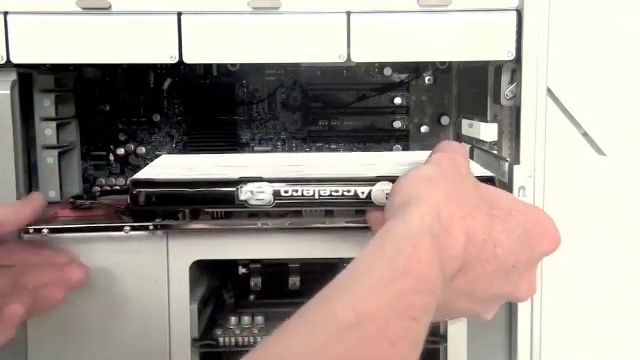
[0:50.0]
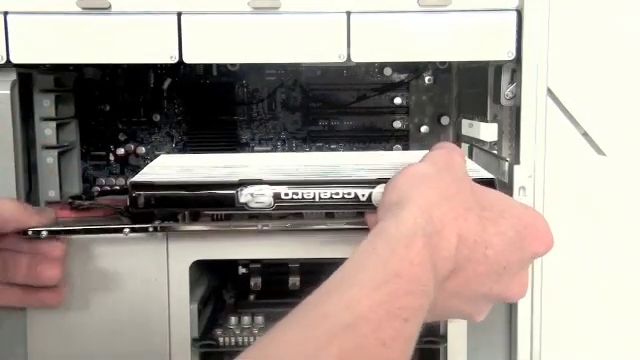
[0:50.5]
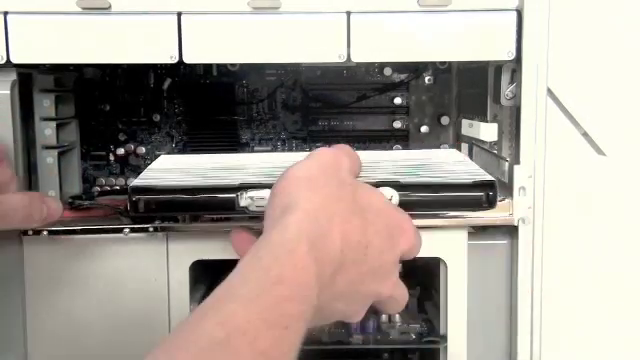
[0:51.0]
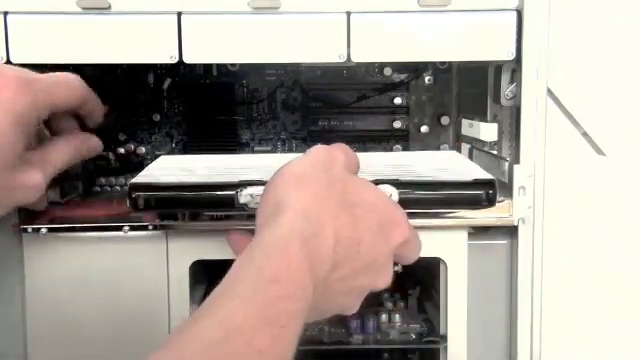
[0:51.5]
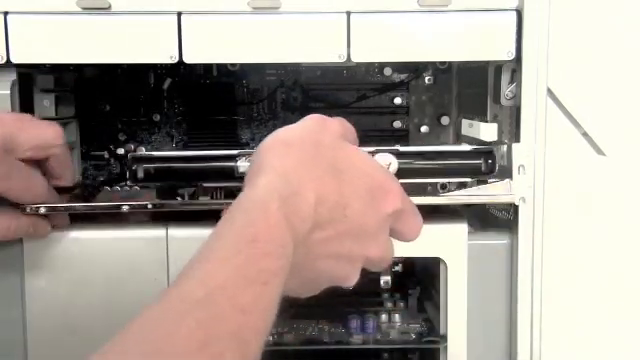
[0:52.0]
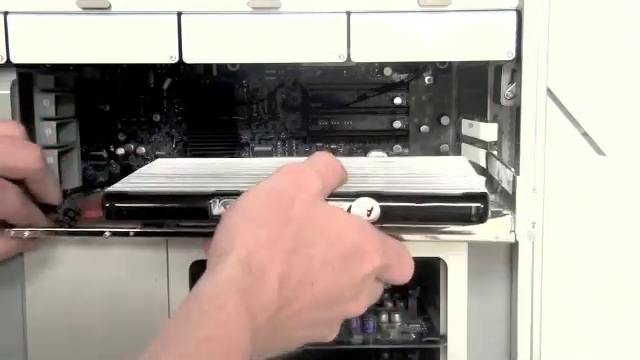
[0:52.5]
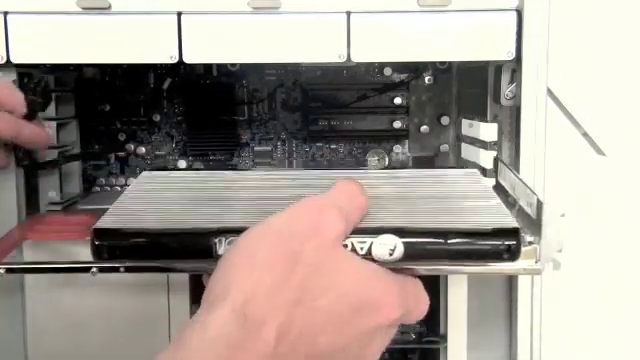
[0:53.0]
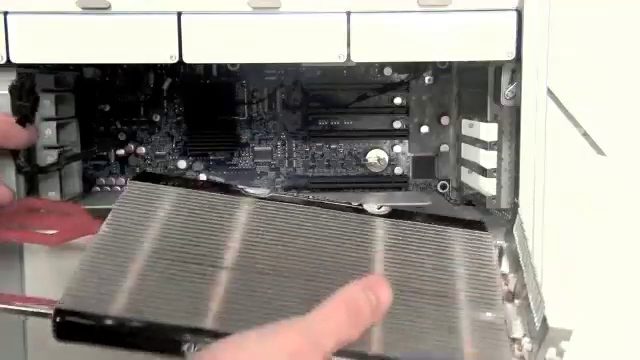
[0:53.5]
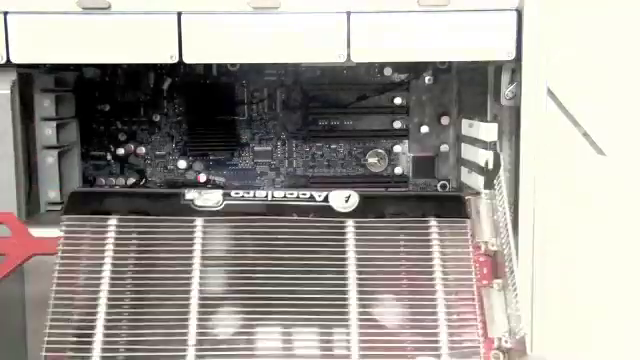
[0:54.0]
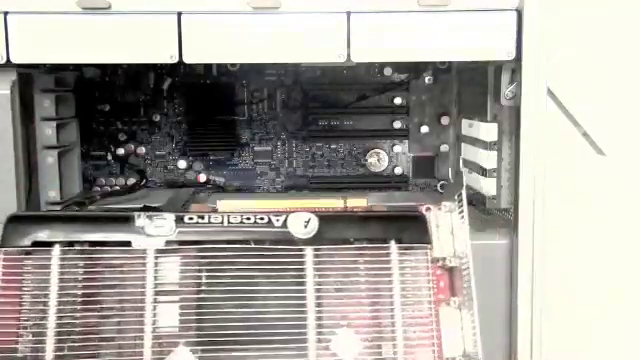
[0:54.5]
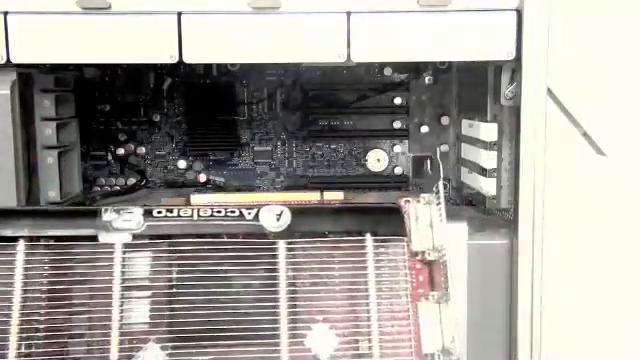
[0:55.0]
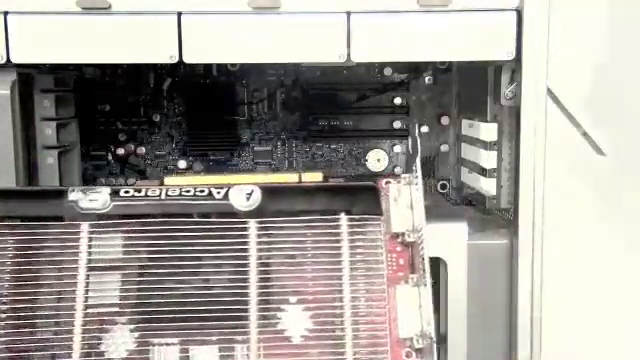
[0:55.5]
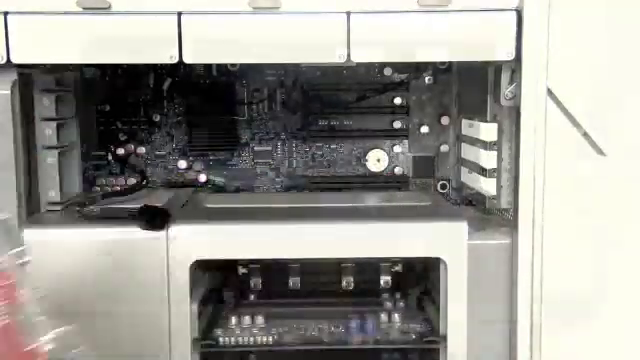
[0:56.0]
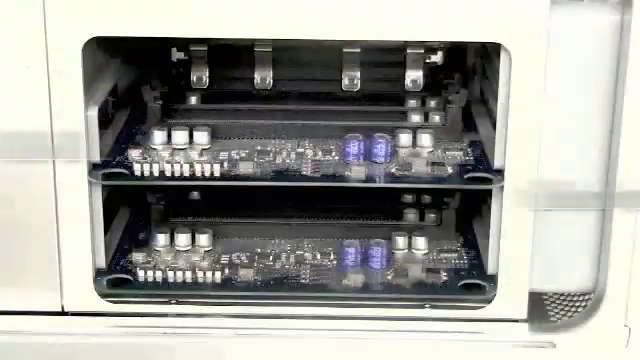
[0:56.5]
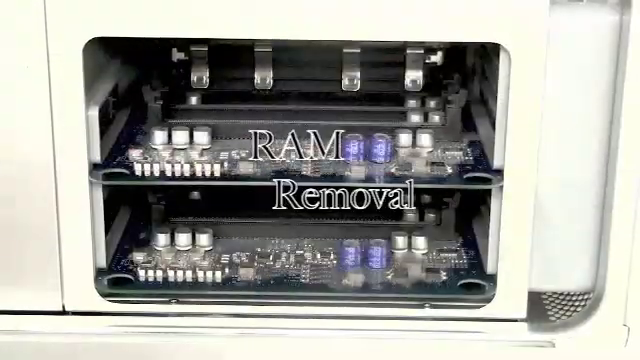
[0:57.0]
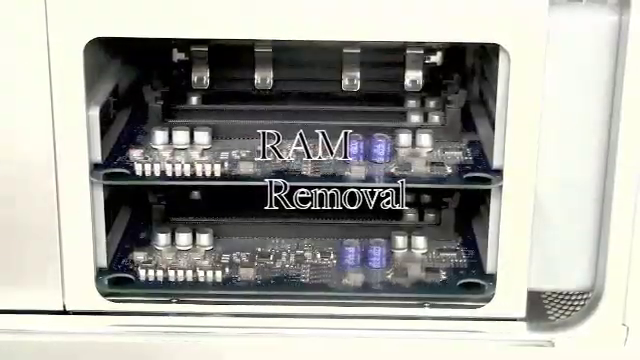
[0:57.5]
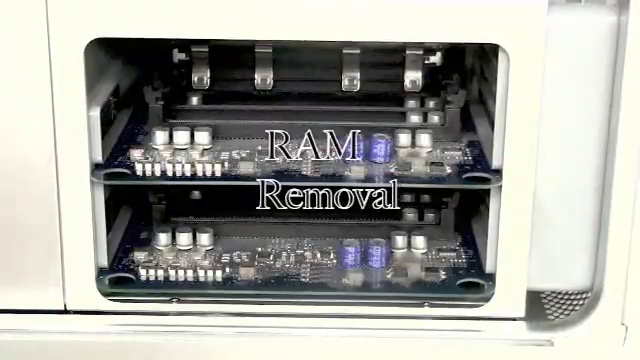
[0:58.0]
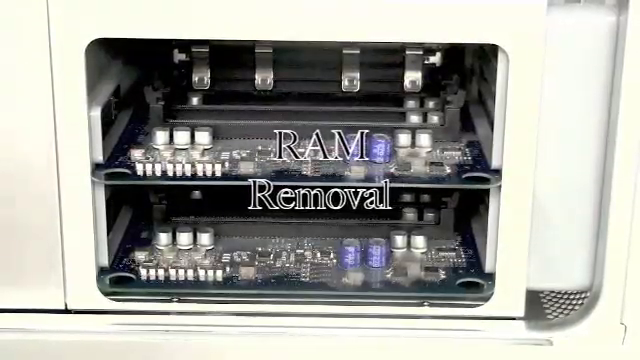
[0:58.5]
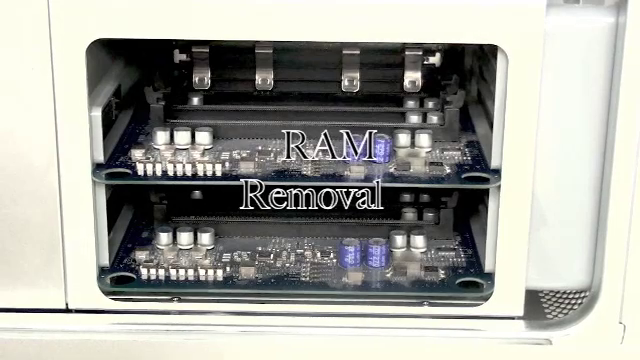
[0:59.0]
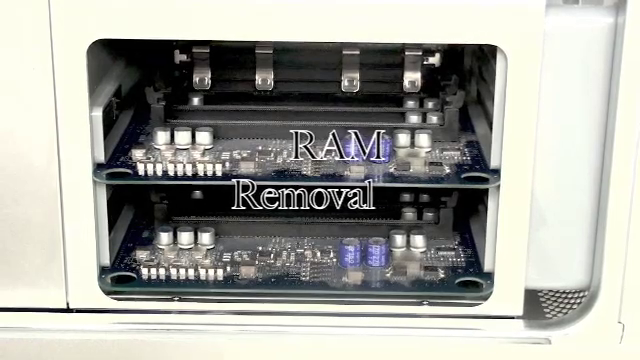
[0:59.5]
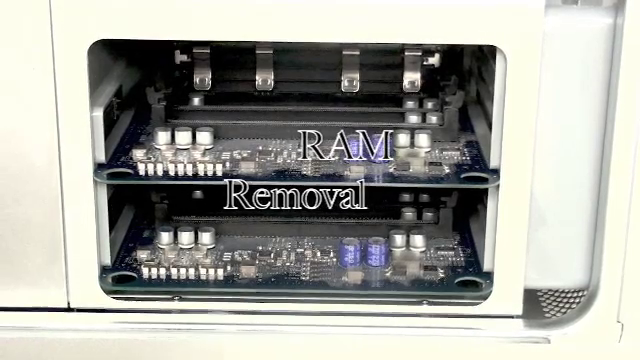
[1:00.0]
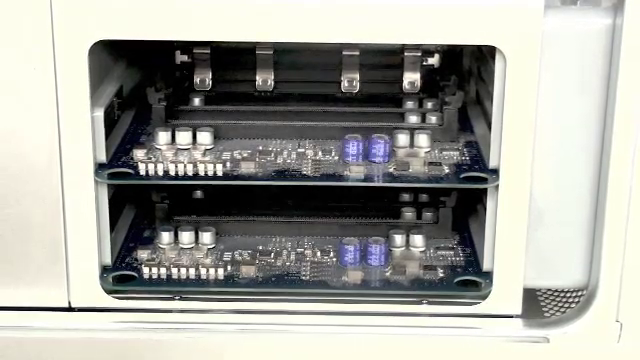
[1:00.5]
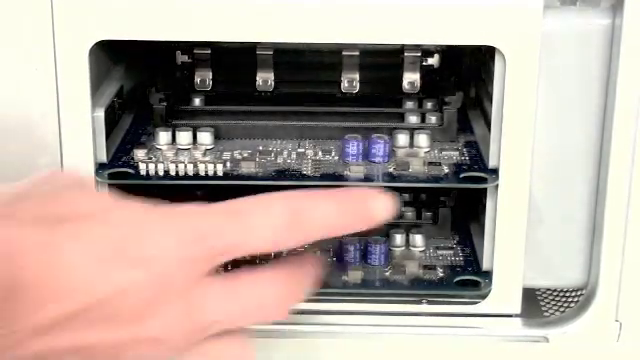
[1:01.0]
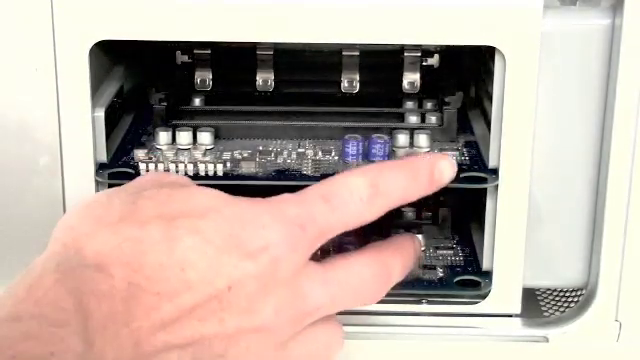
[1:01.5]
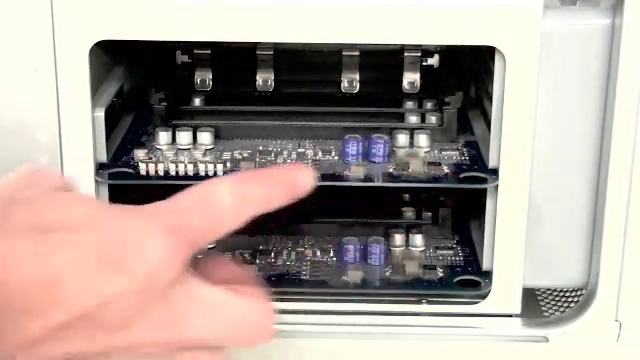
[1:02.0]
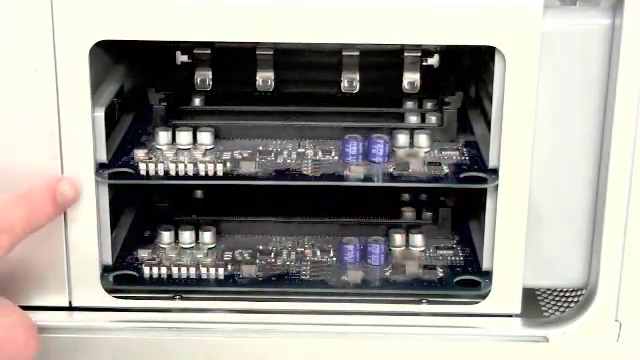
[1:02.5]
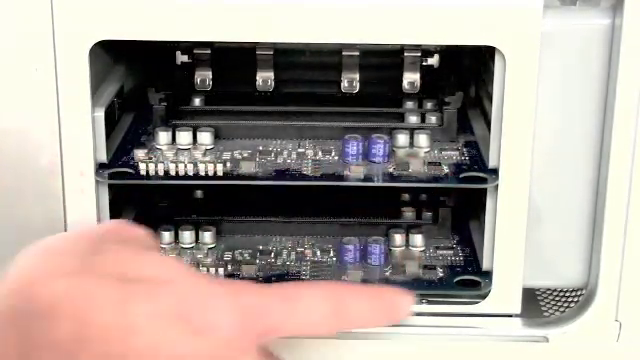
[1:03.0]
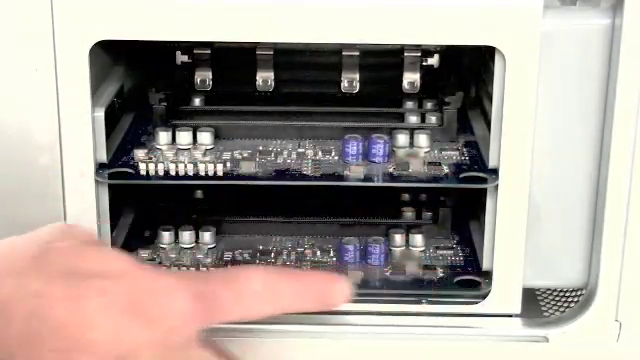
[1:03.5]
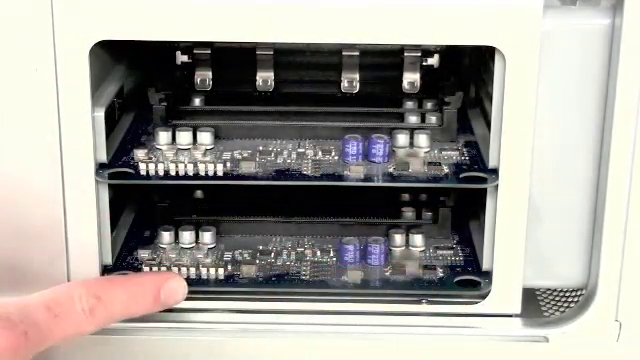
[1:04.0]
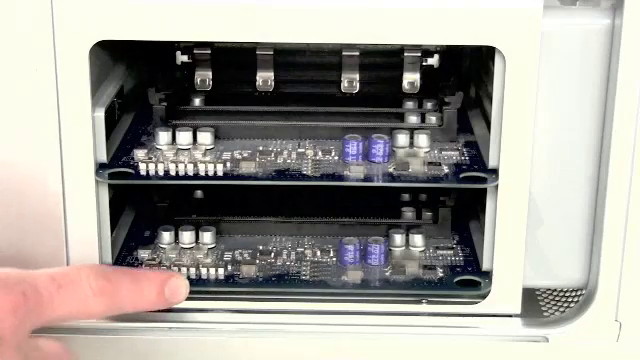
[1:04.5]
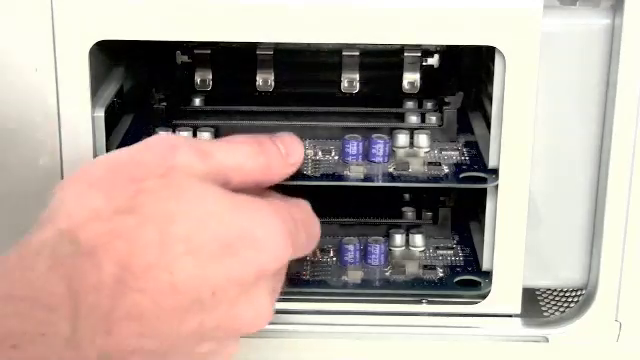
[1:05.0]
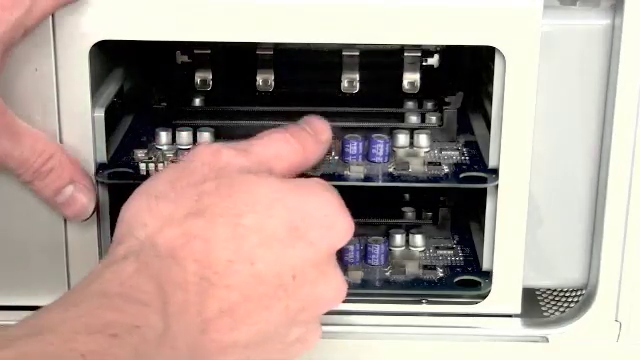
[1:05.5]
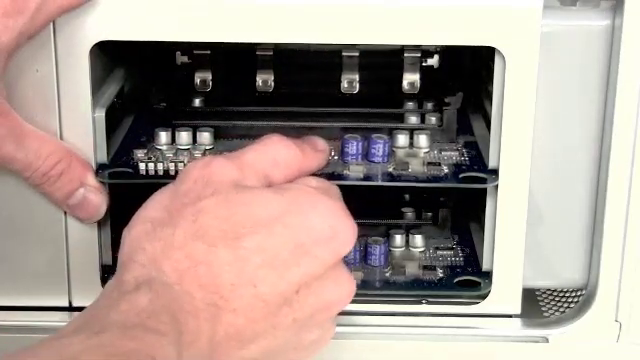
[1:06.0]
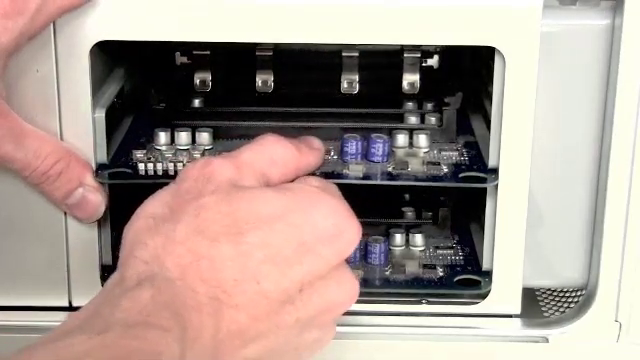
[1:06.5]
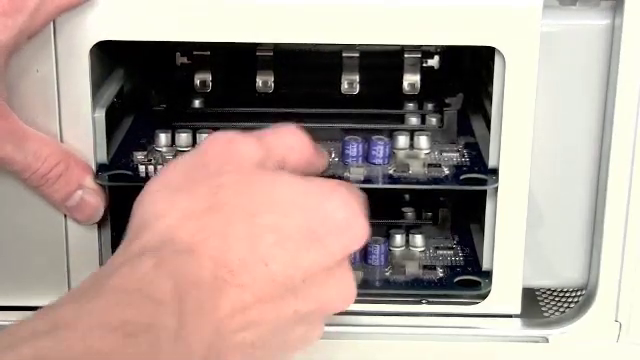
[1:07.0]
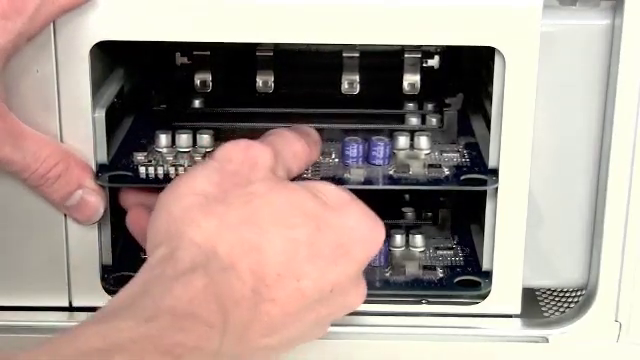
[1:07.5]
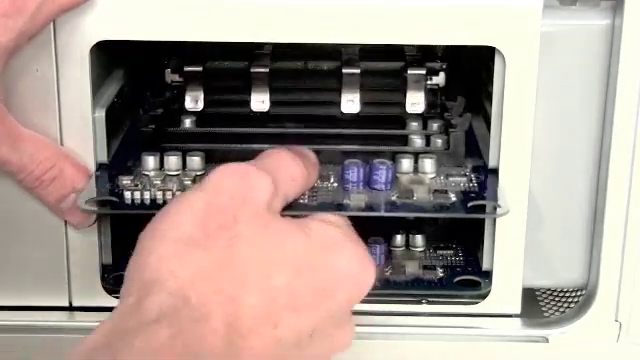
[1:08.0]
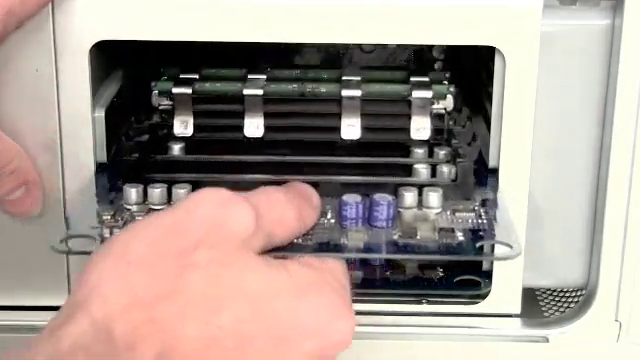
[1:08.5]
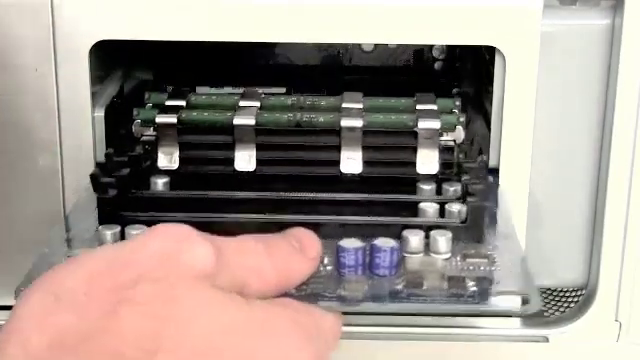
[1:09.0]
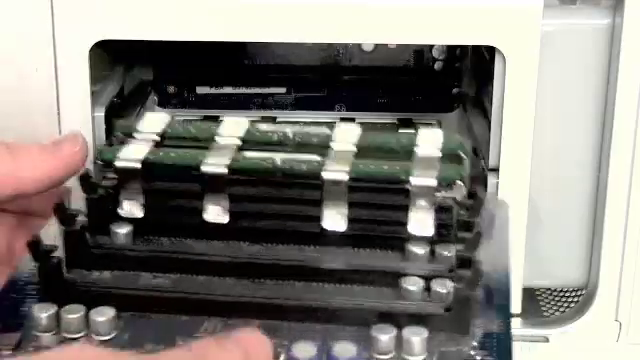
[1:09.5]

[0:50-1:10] The man continues pulling very slowly and removes the part completely from the Mac Pro computer. The video then fades to another view showing a smaller portion of the computer, and the words "RAM Removal" appear in the middle of the screen in black text with a small white outline, then slide left and right out of the frame. His right hand comes in and points at a part inside the computer. He grabs the top part of the piece with his right hand while his left hand holds the left of it still, pulls it completely out of the case, and shows it to the camera, while another one on the bottom remains inside the case.